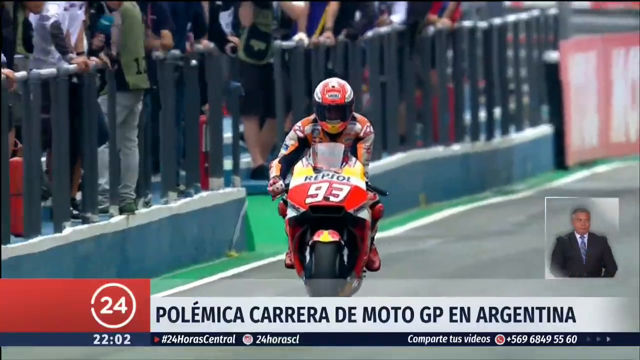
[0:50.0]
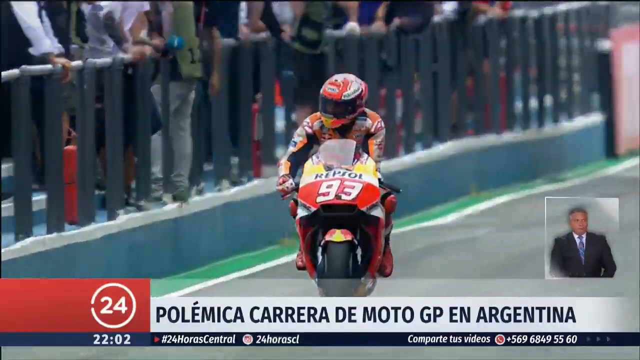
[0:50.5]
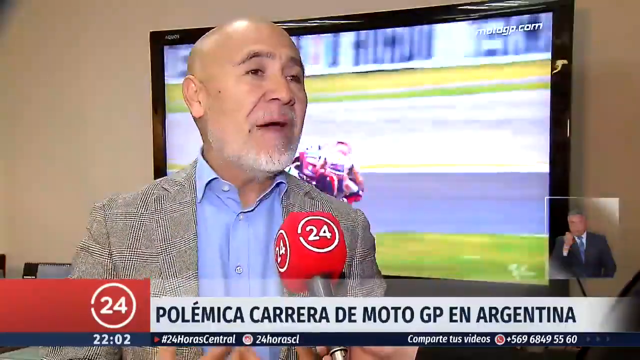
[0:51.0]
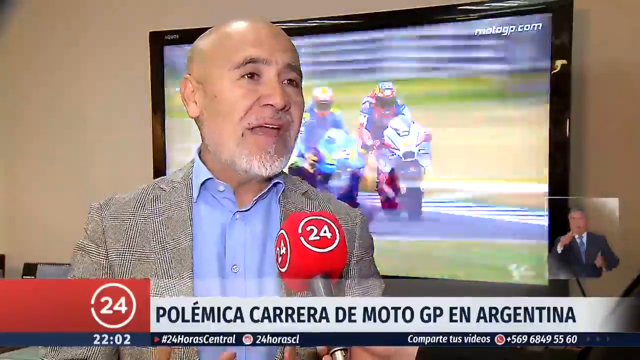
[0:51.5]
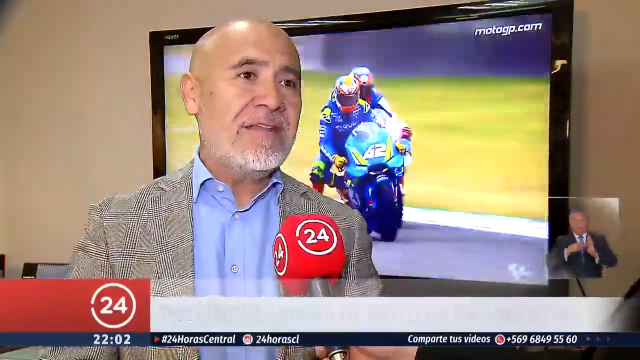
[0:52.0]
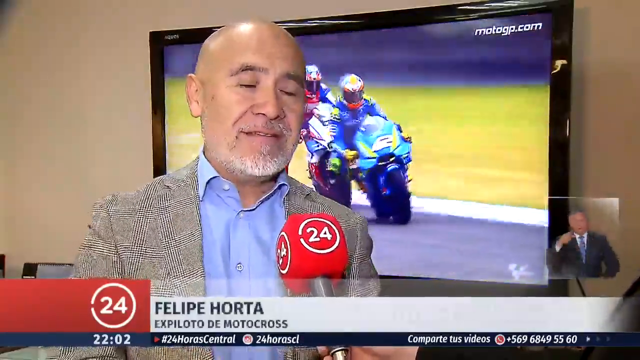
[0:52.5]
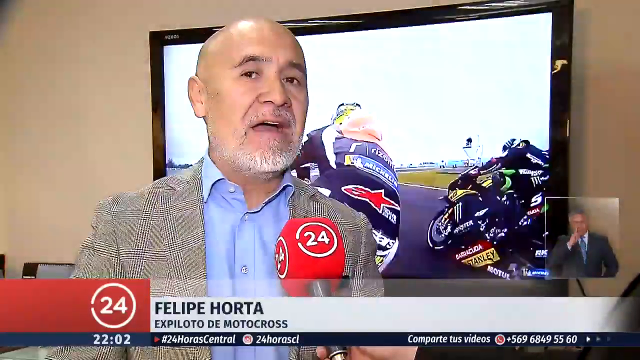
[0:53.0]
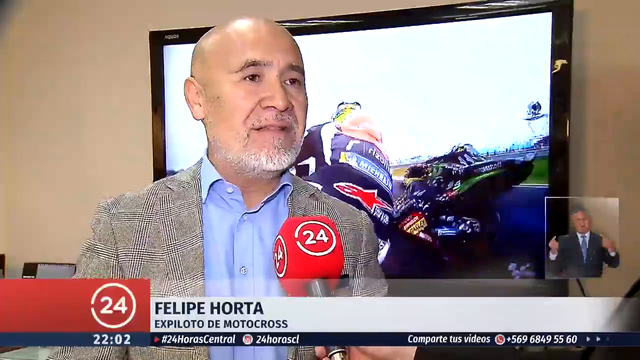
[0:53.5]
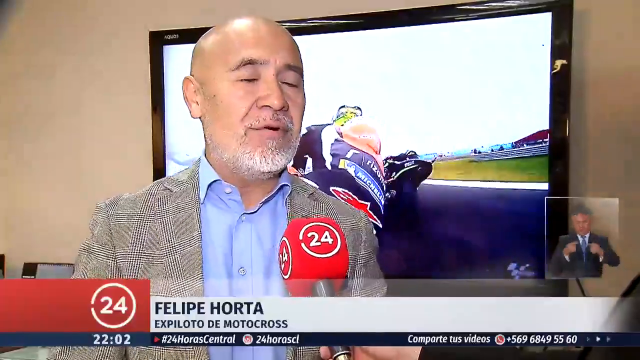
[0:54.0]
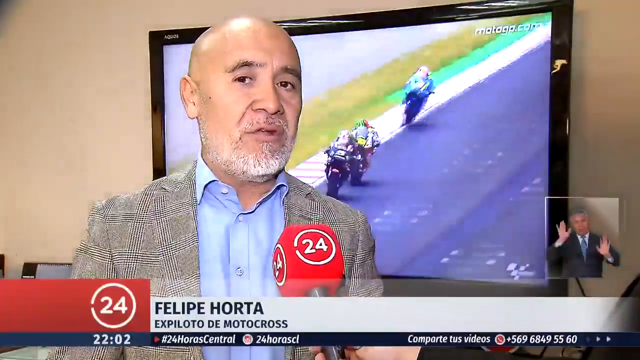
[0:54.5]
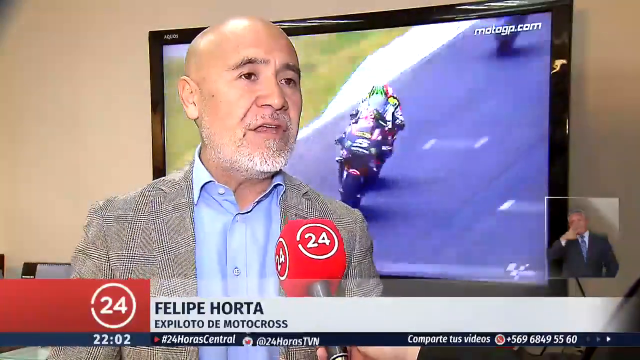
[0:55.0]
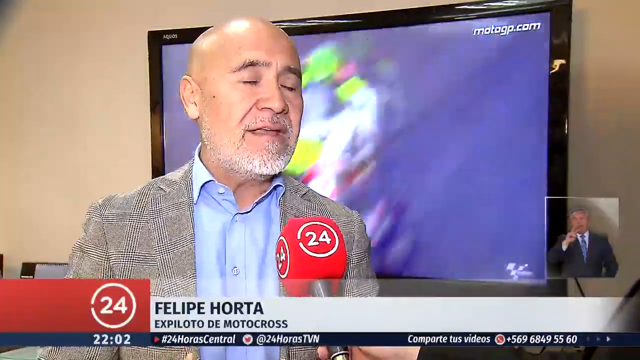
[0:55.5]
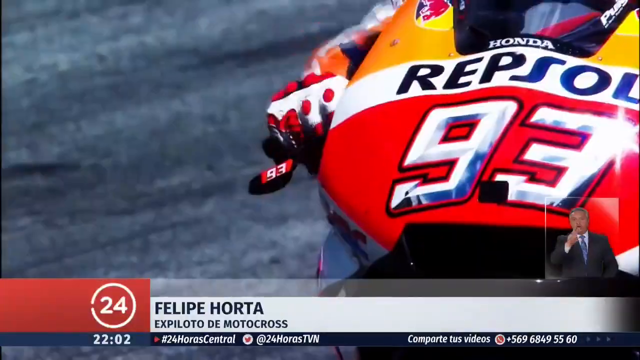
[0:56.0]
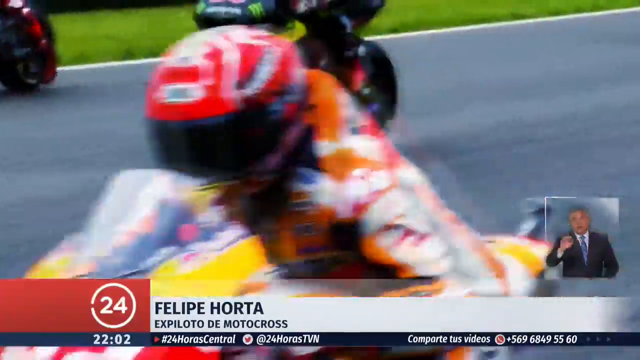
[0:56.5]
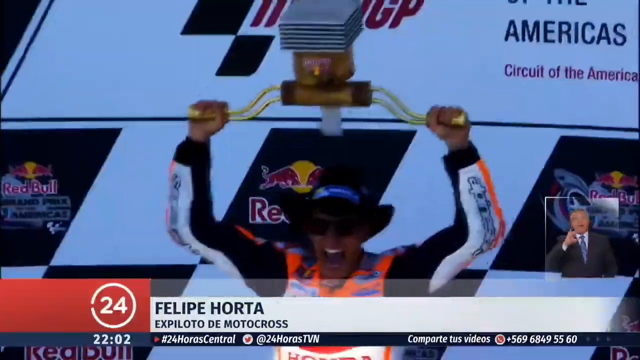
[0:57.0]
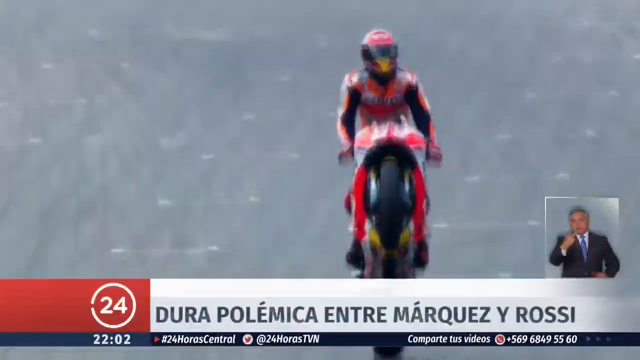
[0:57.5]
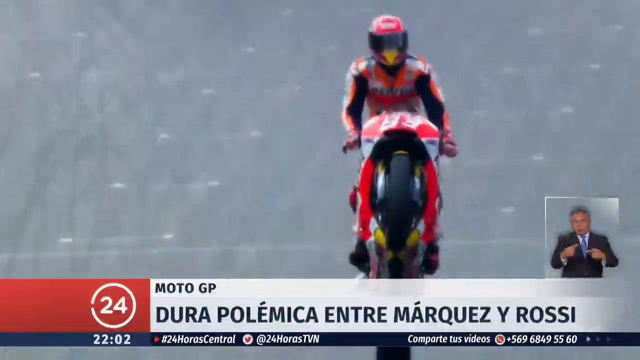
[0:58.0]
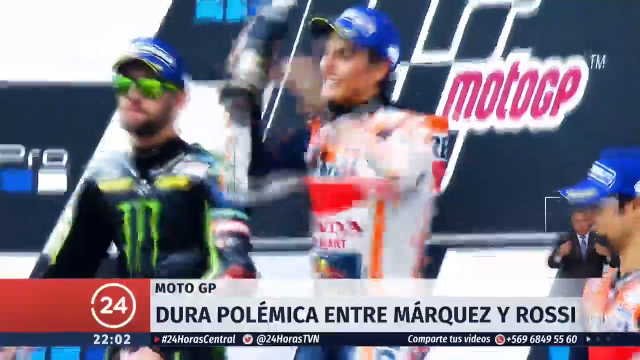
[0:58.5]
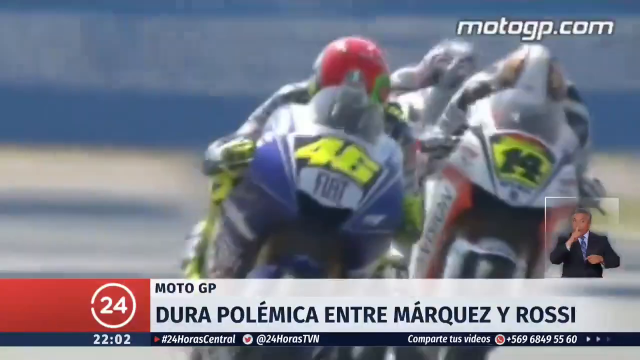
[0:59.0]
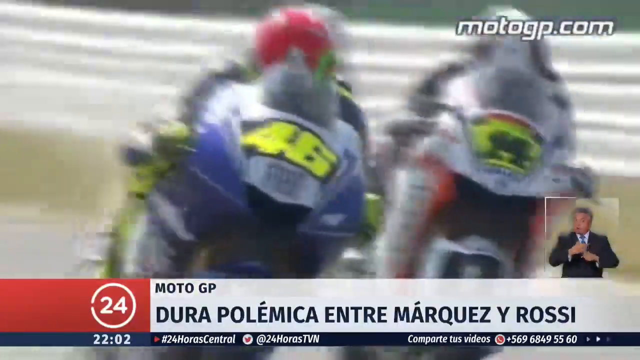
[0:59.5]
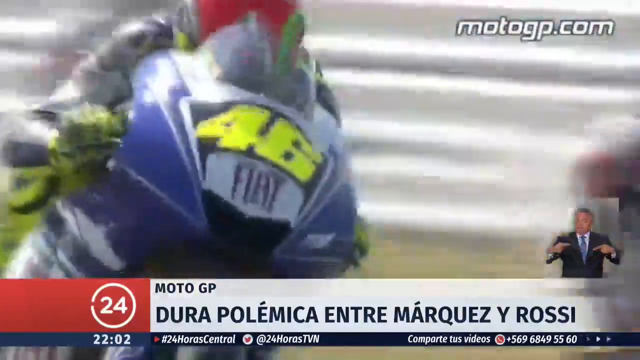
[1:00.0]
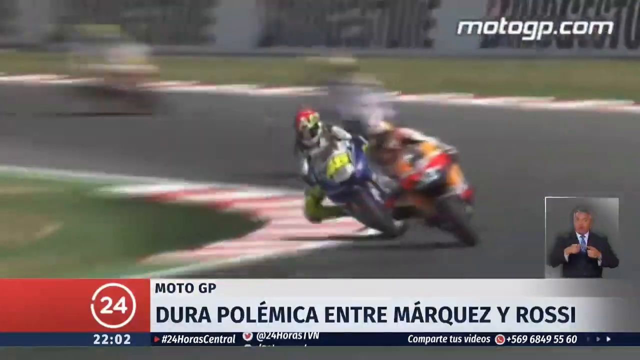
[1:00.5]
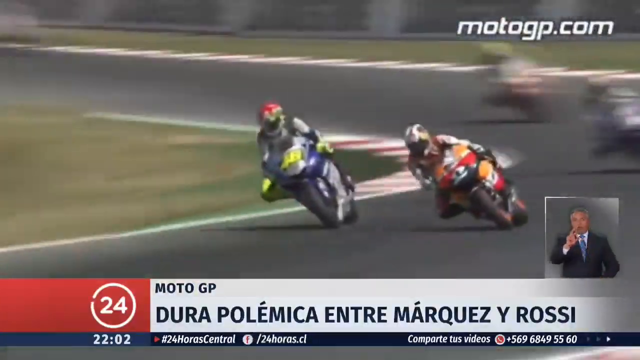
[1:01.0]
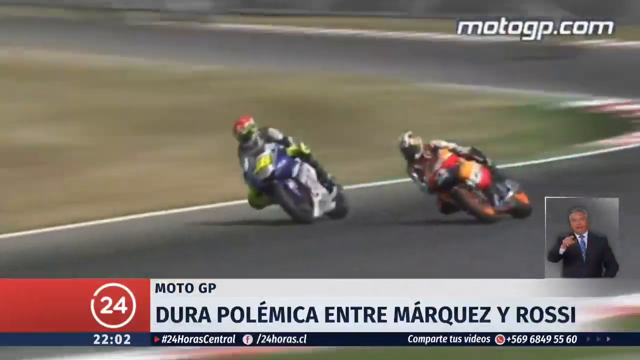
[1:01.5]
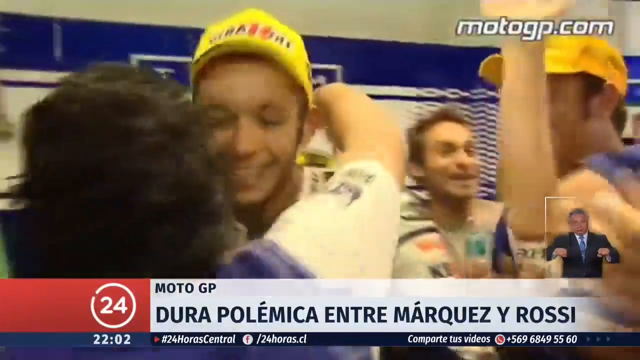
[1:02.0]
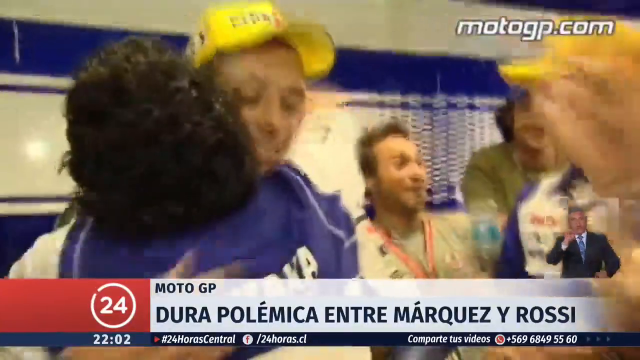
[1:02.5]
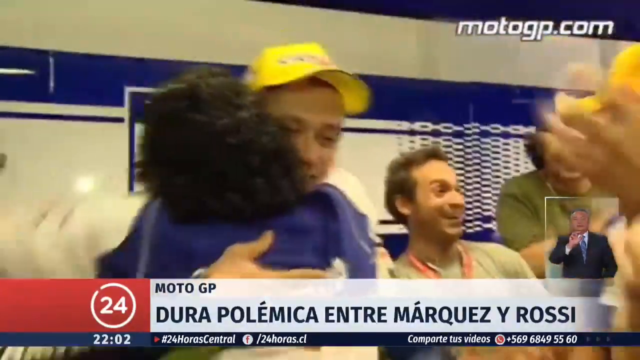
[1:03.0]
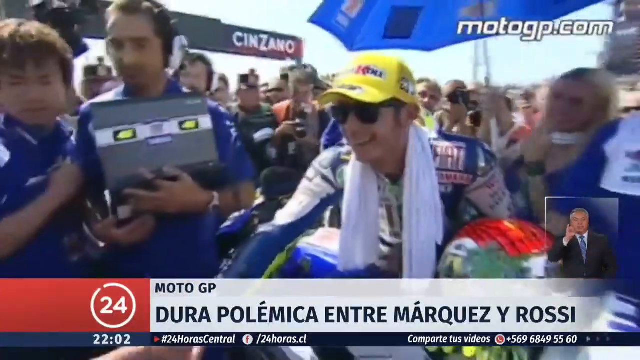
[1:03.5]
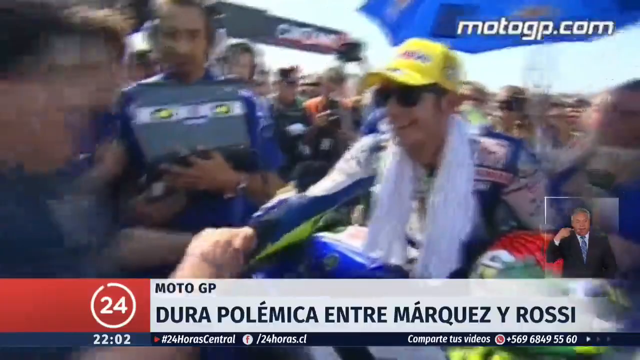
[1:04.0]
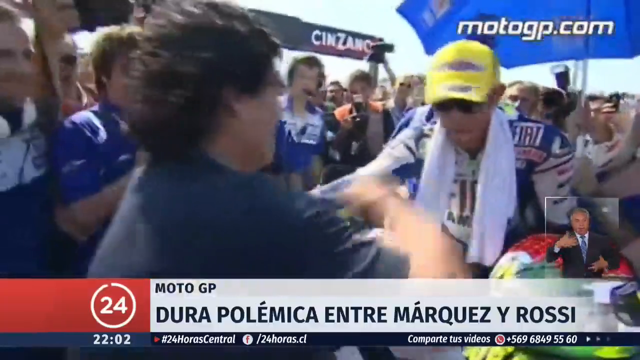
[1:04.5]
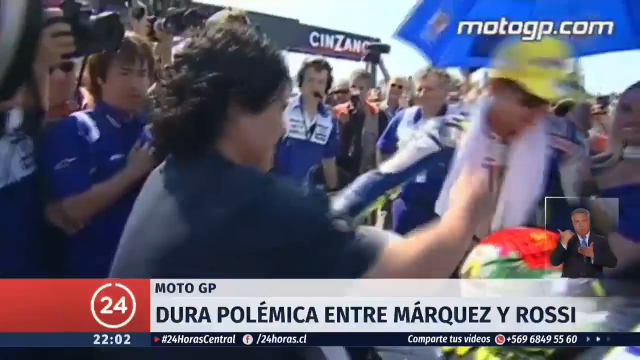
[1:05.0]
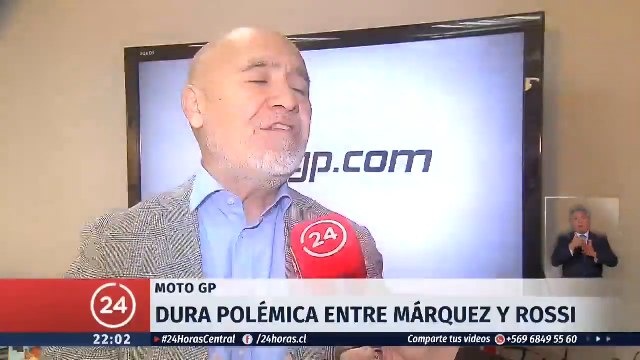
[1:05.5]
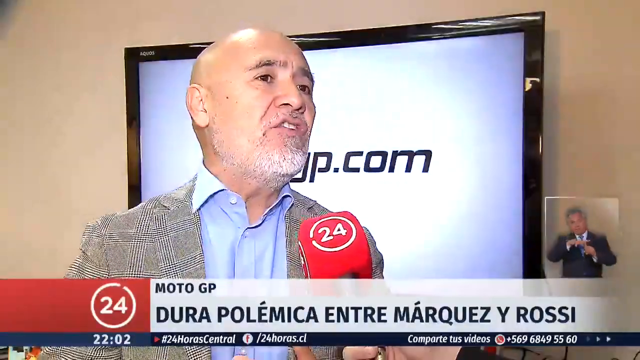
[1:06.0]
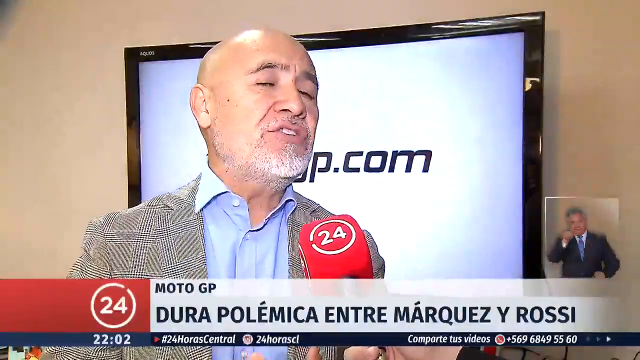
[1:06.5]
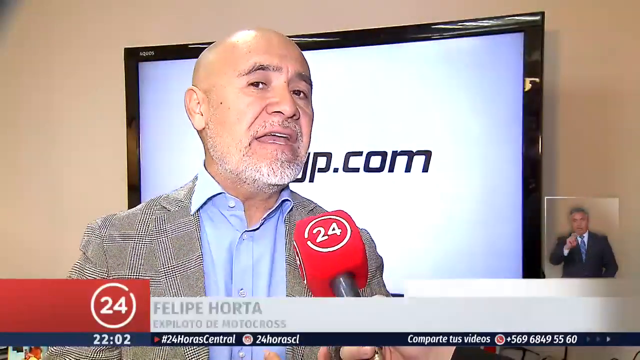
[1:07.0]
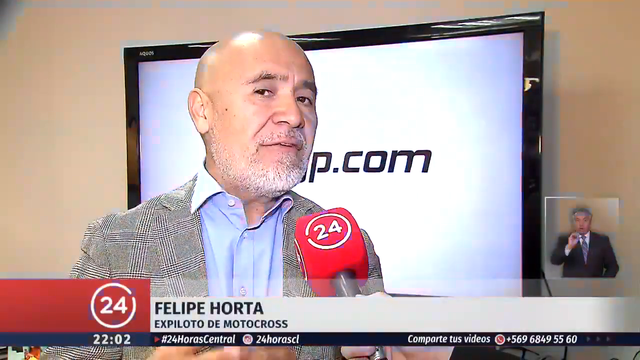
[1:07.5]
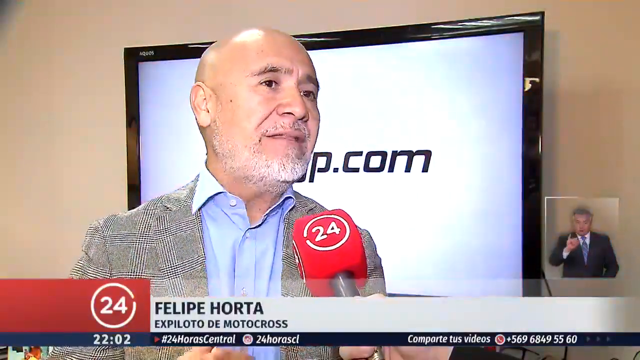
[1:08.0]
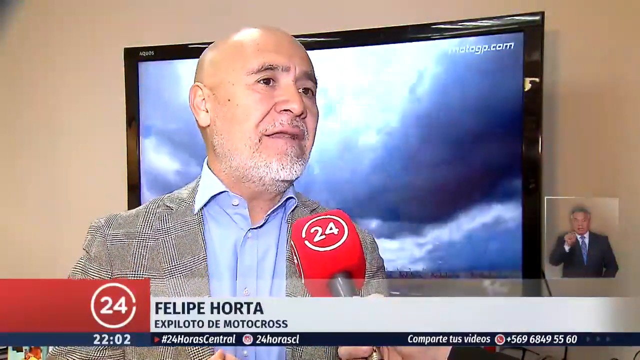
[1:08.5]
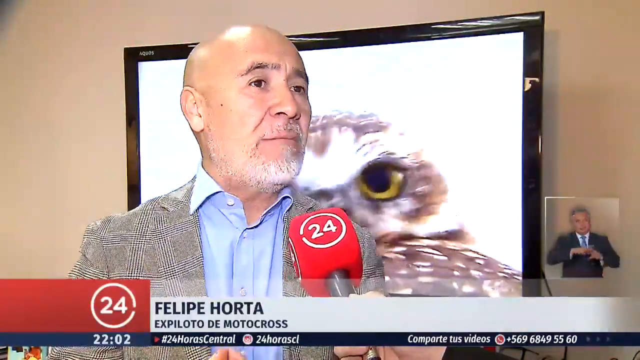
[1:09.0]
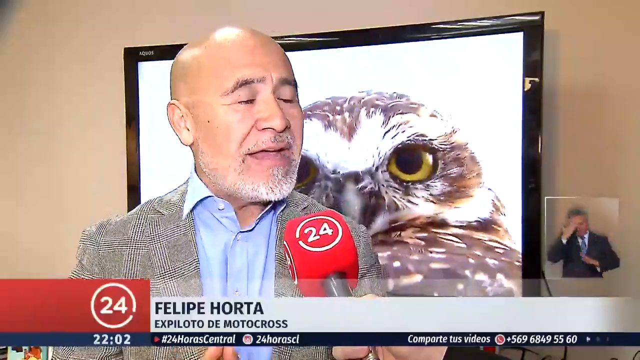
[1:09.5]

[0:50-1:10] Racer number 93 rides his motorcycle, with some people on the left side toward the middle. The interpreter is in the little box on the lower right of the screen, and the number 24 logo of the news station is shown. The view returns to a bald man wearing a gray suit jacket and a blue shirt, with the number 24 microphone. Two motorcycles are on the screen, one numbered 42 or 62, jumping ahead of the one with the red outfit on the back. Another view shows three motorcycles on the screen as the man is talking. Somebody holds up a trophy, possibly having won, with "Americas" and Circuit of America in the background. MotoGP appears, possibly a sponsor or the name of the group. Someone wears black and neon green Monster Energy clothing, neon green sunglasses and a blue hat; two racers have blue hats. One waves his hands and has Honda on his white and red outfit. Footage follows of a motorcycle, possibly his, with "Fiat" on the front and the number 46, along with other racers. People in yellow hats celebrate, and a lady hugs one of the men.